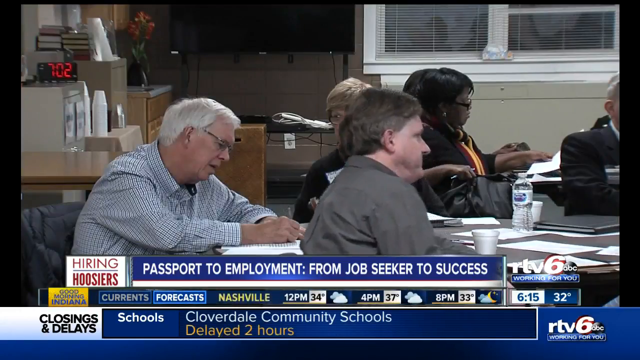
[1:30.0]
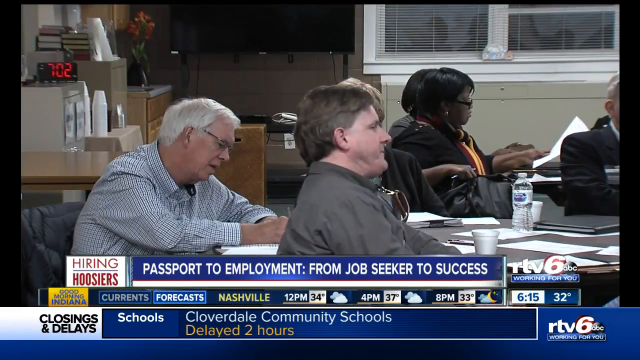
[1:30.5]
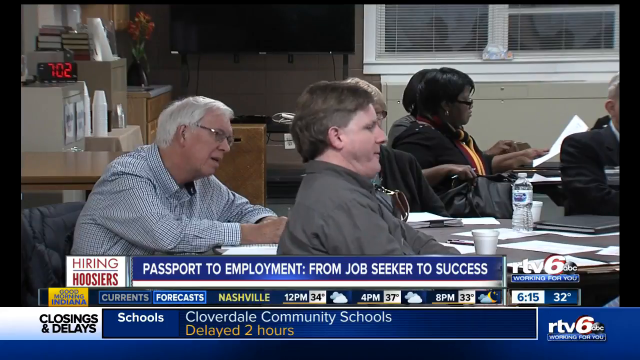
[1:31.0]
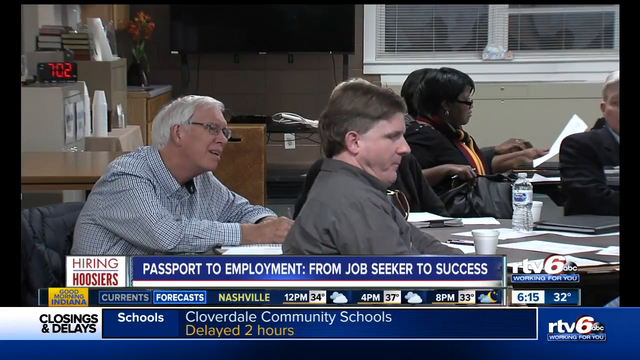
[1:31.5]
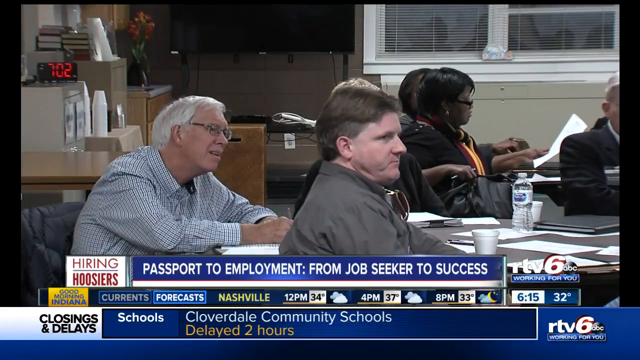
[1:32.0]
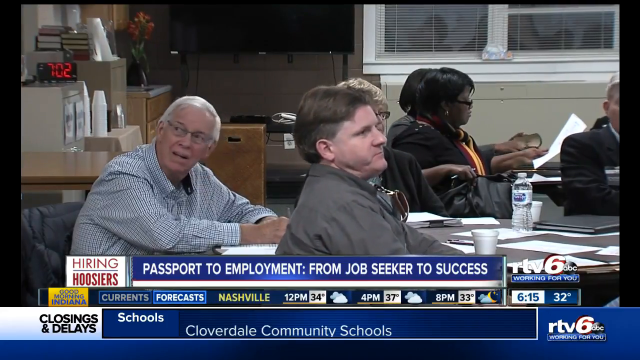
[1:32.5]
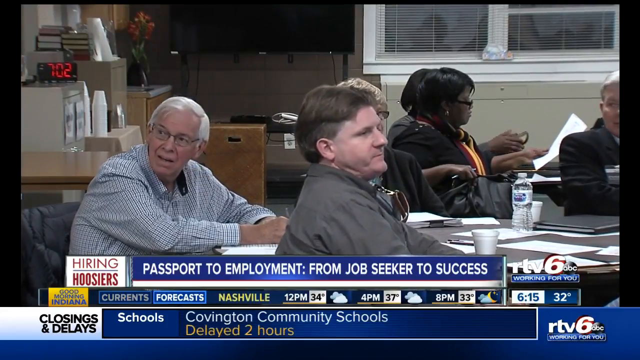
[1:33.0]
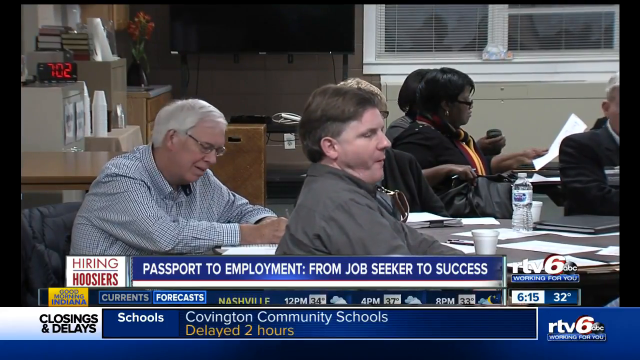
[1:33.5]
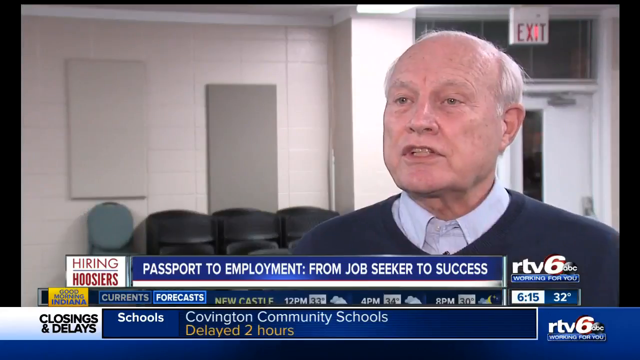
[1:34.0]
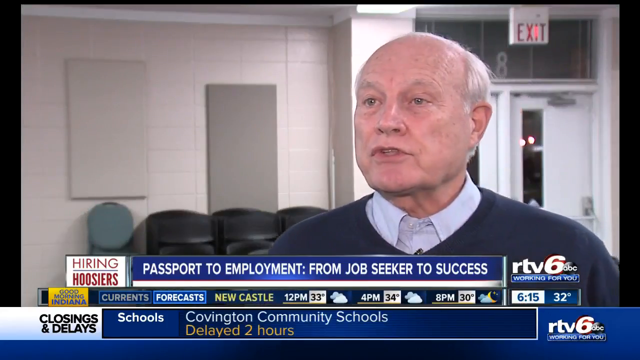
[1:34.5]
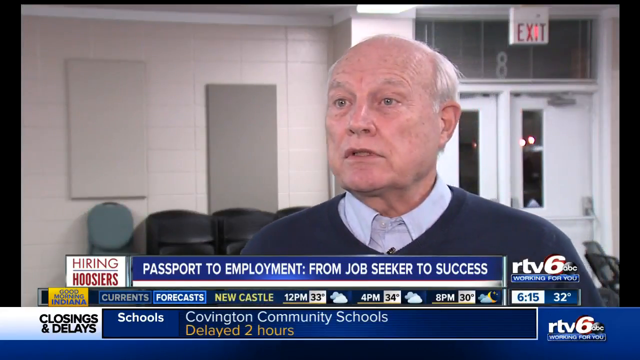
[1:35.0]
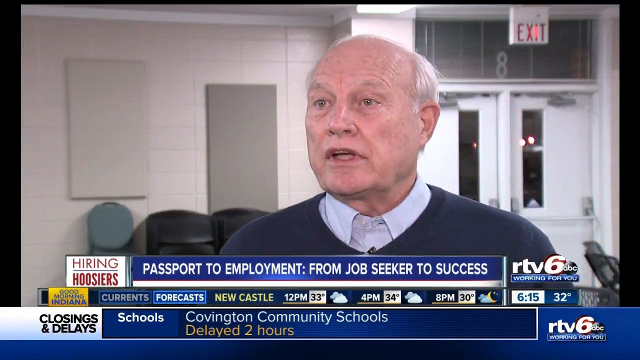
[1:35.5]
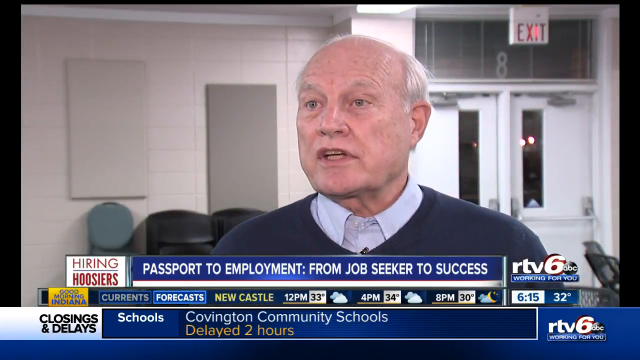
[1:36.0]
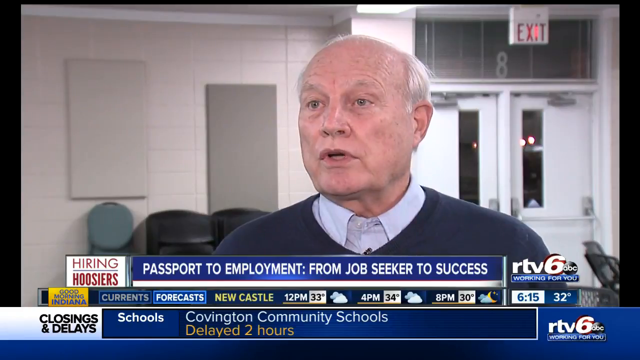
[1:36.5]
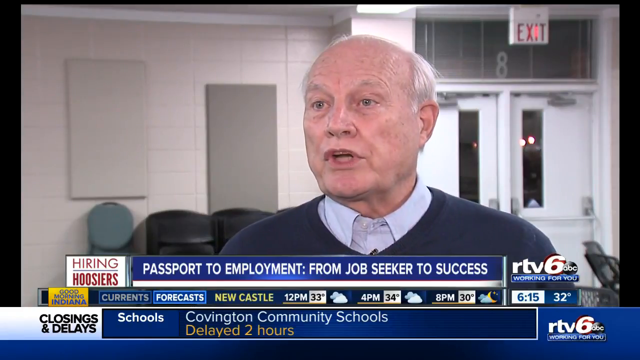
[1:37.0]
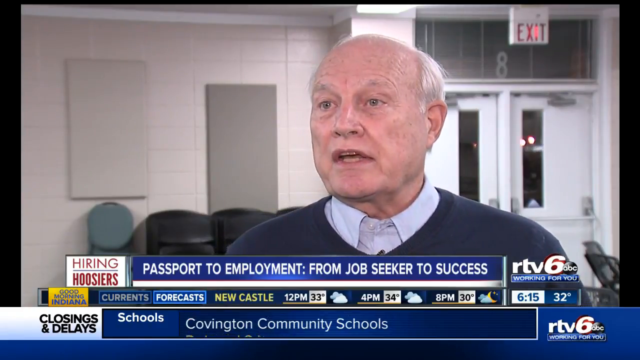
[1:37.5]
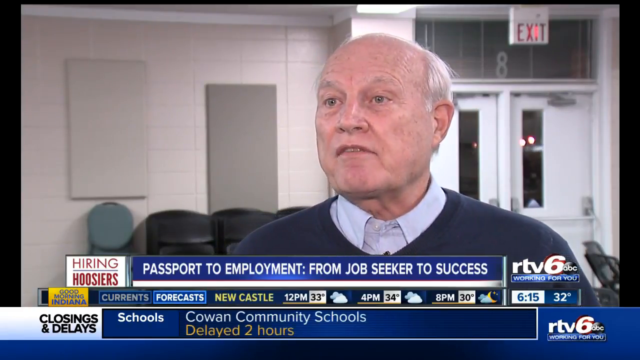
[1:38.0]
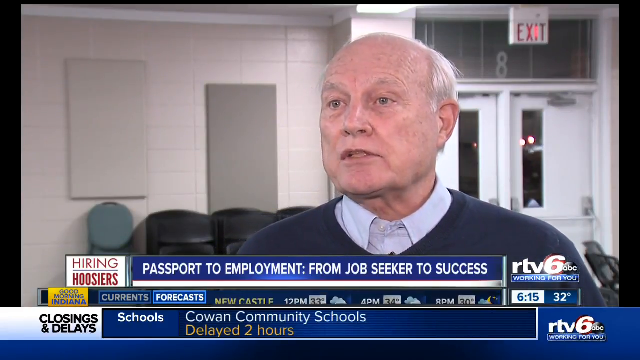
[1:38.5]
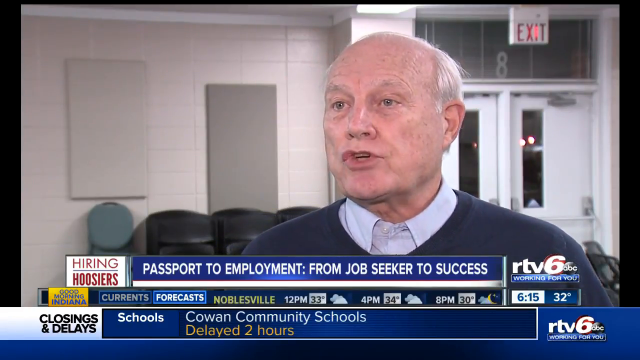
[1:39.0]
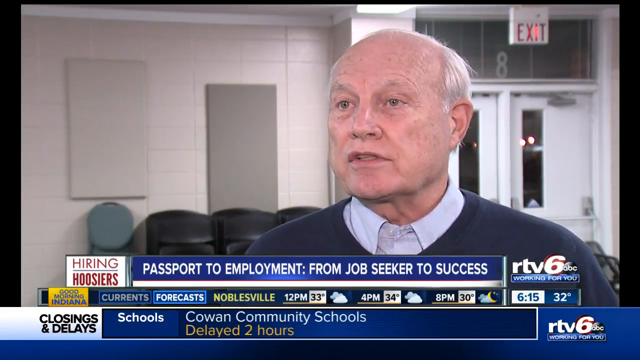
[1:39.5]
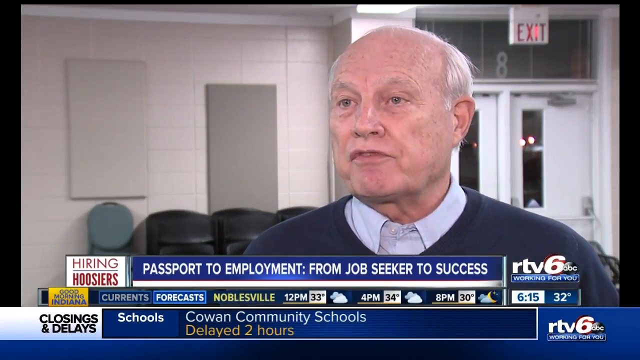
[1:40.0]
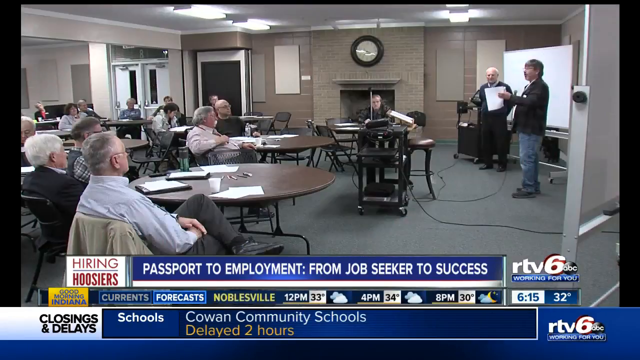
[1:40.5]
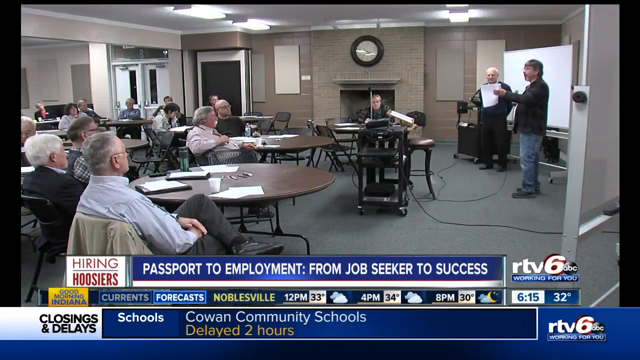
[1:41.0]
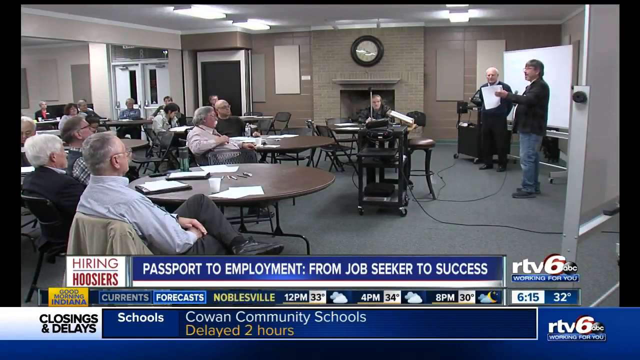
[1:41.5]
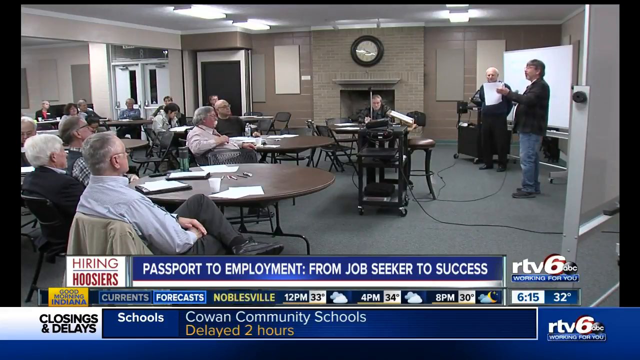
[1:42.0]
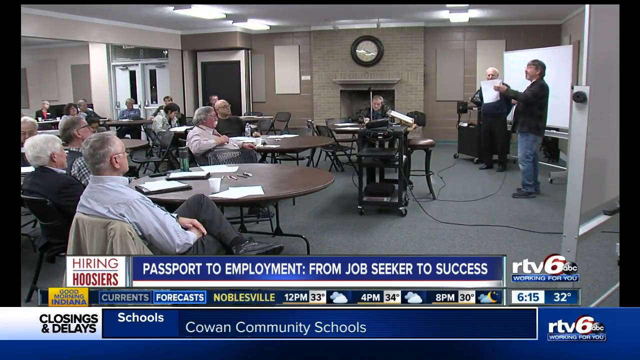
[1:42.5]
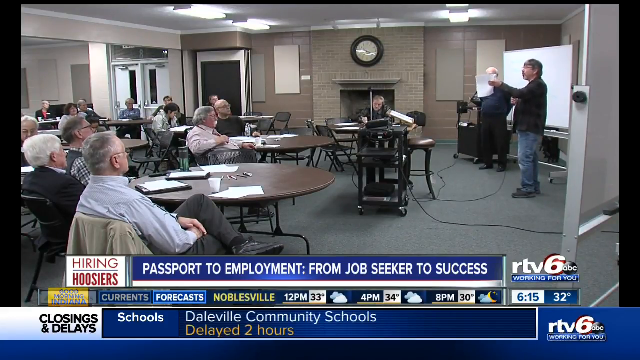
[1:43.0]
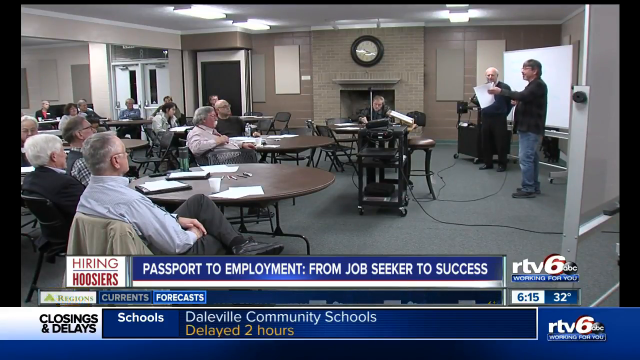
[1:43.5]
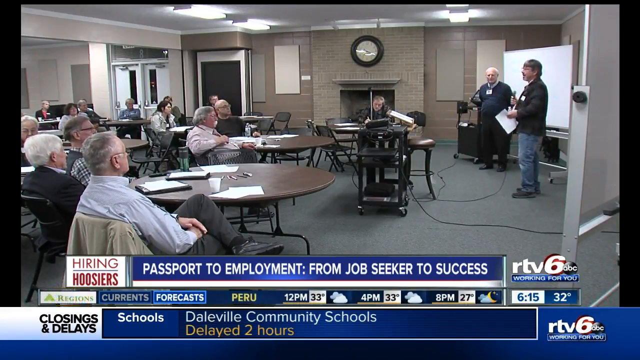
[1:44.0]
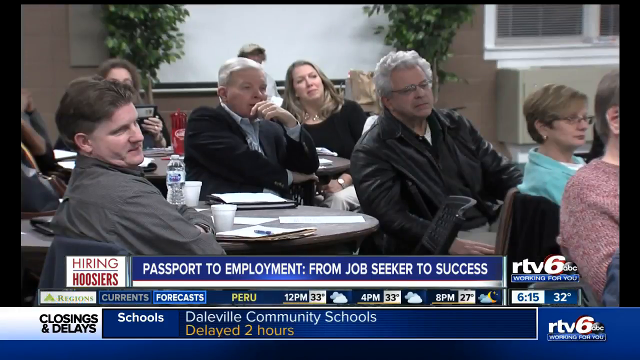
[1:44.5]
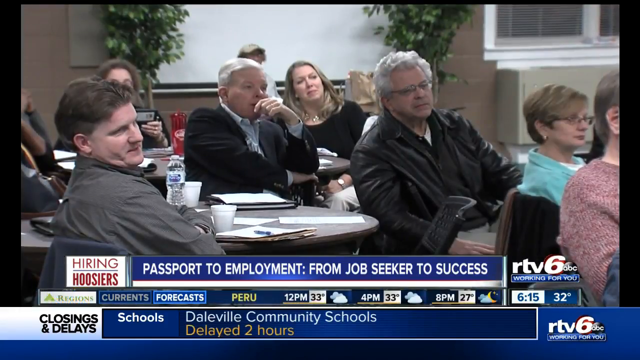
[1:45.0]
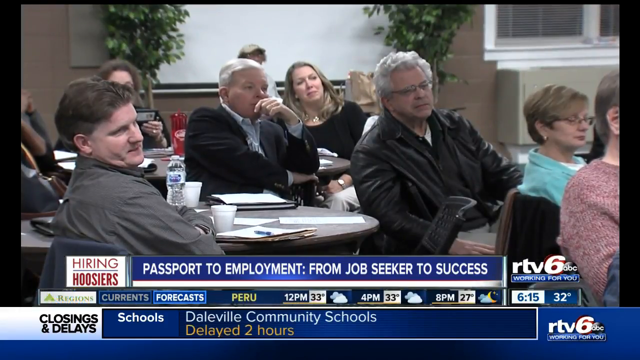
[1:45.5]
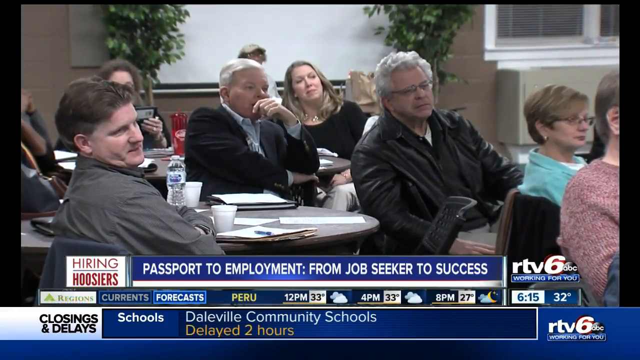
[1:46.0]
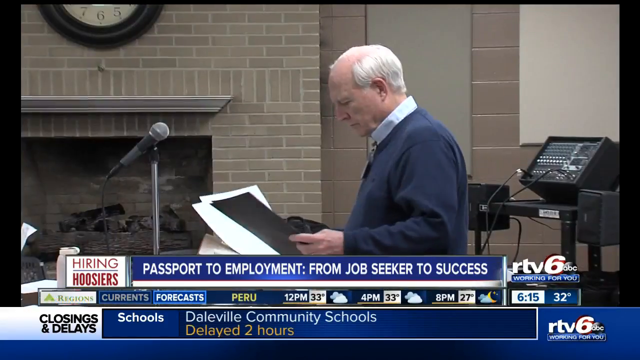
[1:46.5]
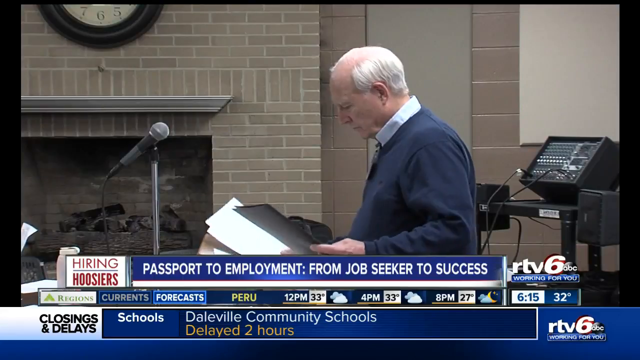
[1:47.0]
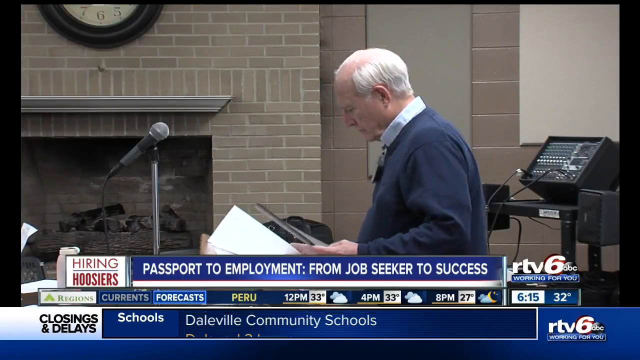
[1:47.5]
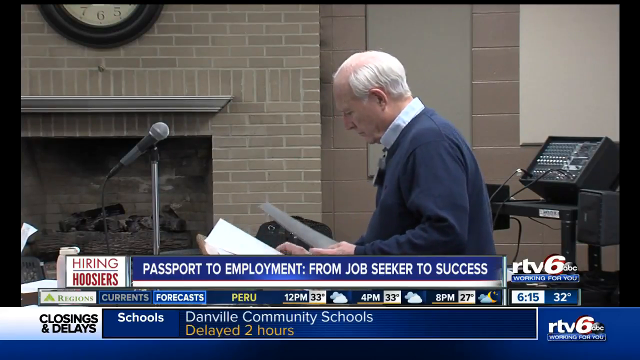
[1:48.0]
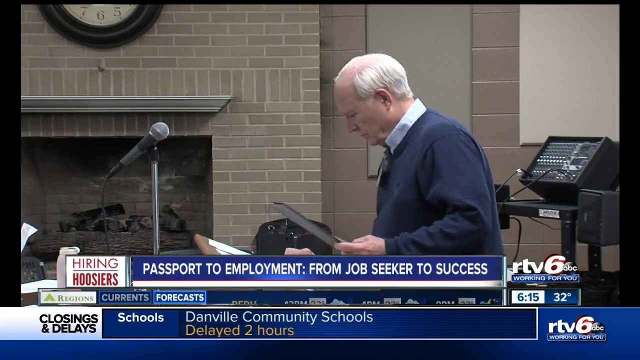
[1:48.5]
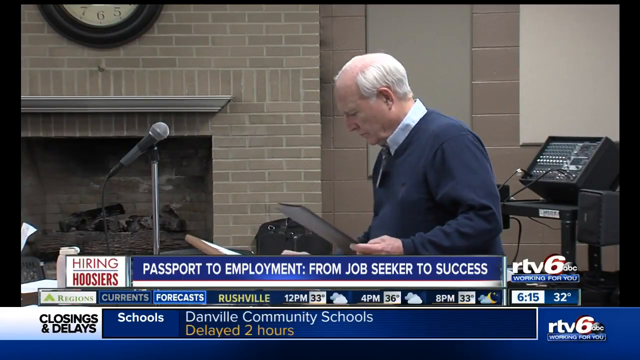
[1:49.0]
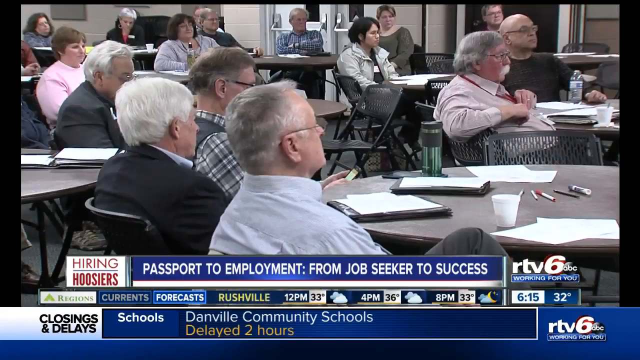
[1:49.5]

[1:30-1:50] The camera focuses on one table. A gray-haired man in a shirt, maybe in his late 50s or early 60s, sits there along with a man with dark brown hair in a dark green shirt, and a woman on the other side of the table. The white-haired man looks toward the side of the room. The founder then talks to the newscaster. Next, an unidentified man is up front talking, while the white-haired man at the front shuffles papers. It looks dark outside, so it seems to be an evening class.